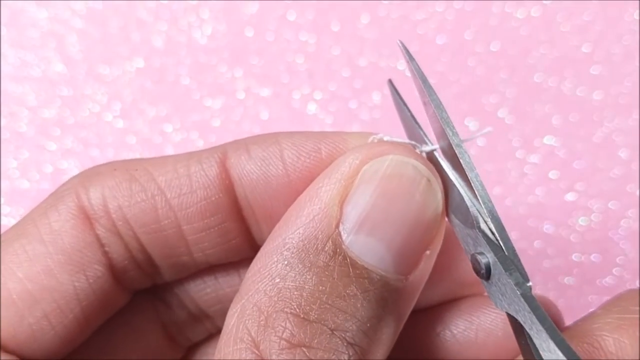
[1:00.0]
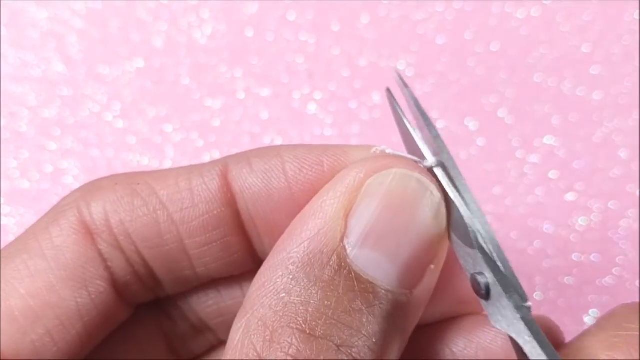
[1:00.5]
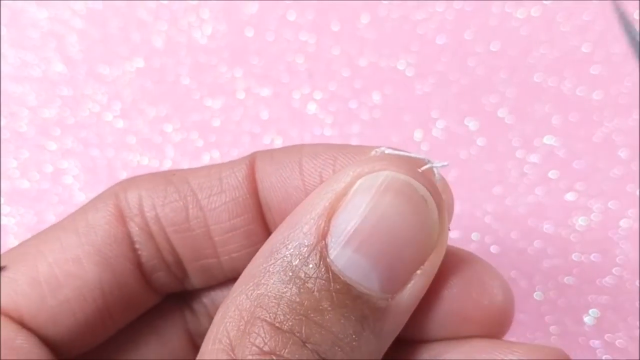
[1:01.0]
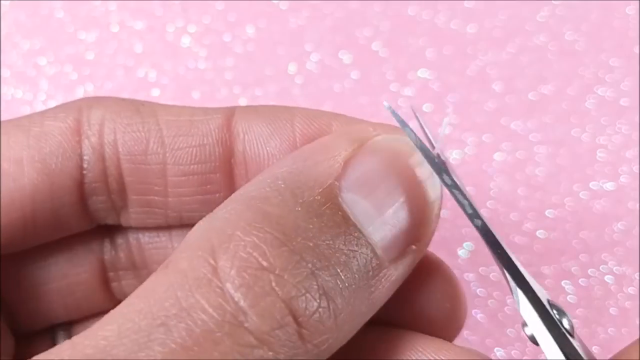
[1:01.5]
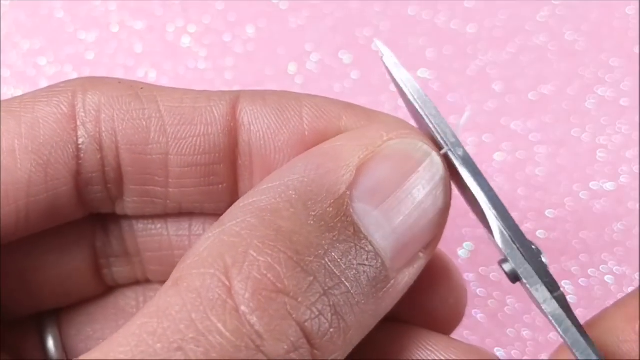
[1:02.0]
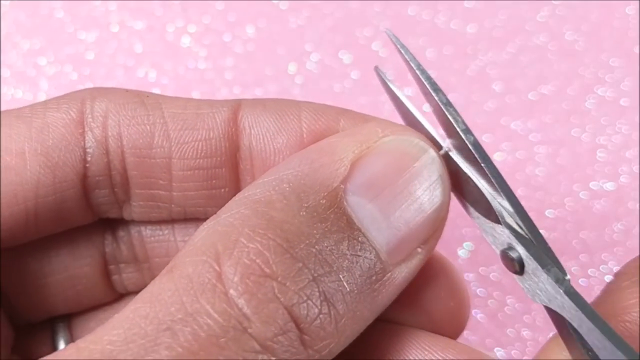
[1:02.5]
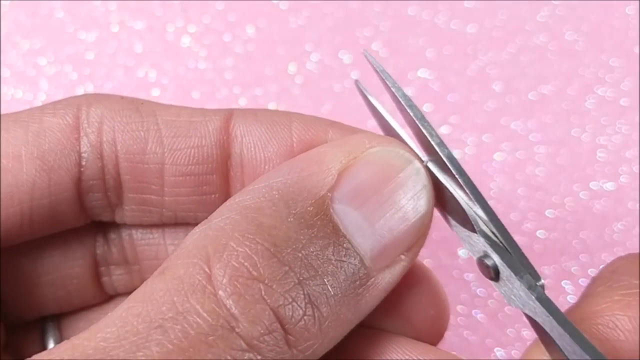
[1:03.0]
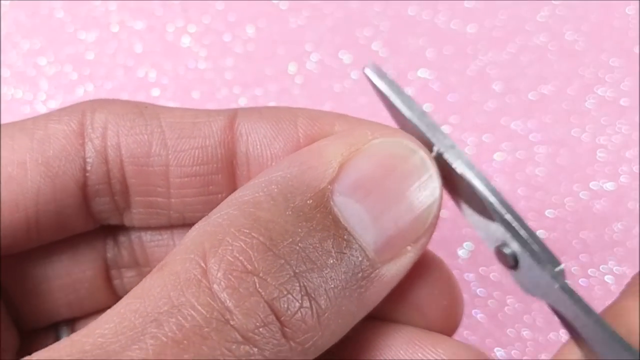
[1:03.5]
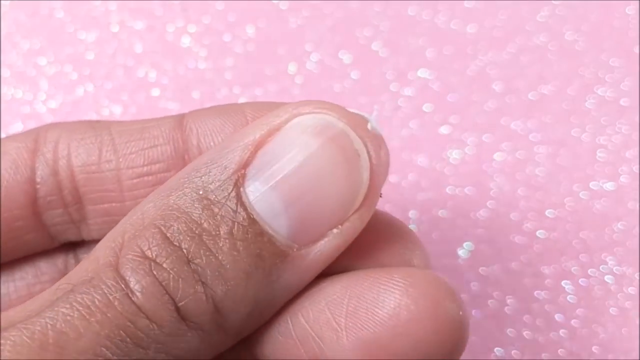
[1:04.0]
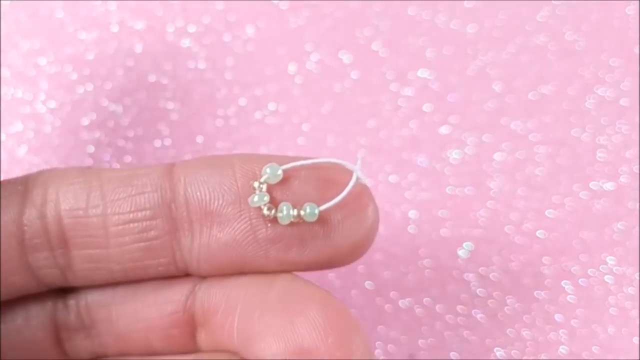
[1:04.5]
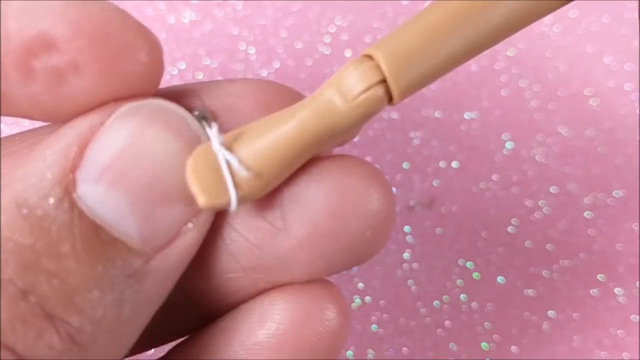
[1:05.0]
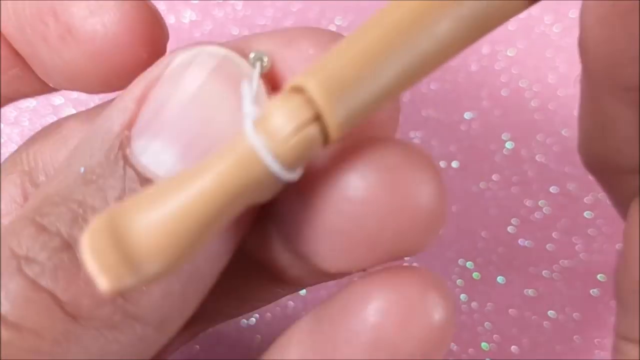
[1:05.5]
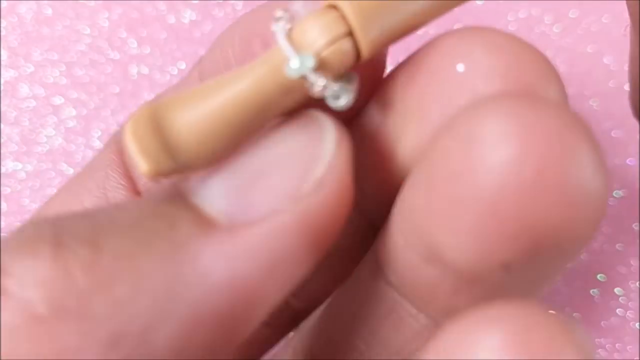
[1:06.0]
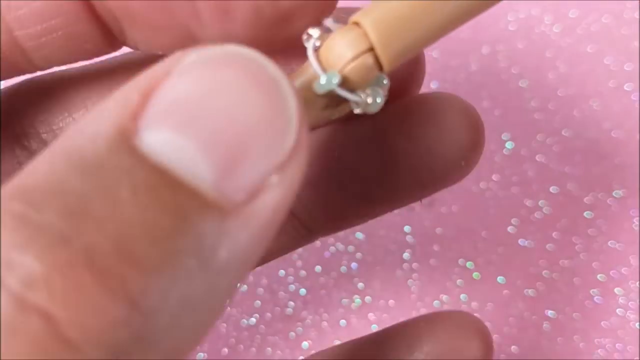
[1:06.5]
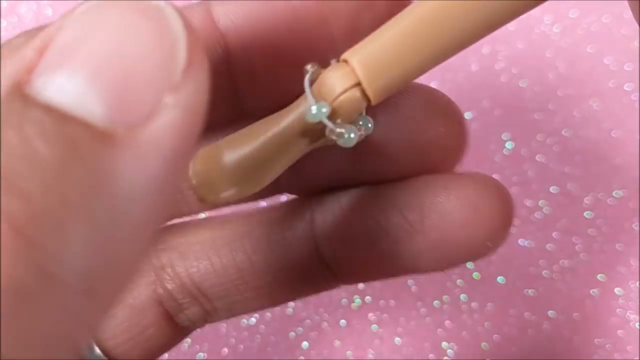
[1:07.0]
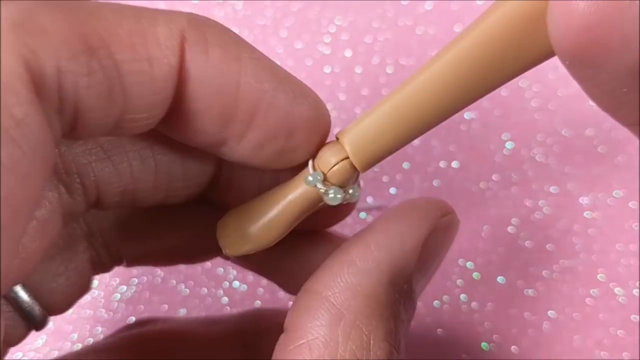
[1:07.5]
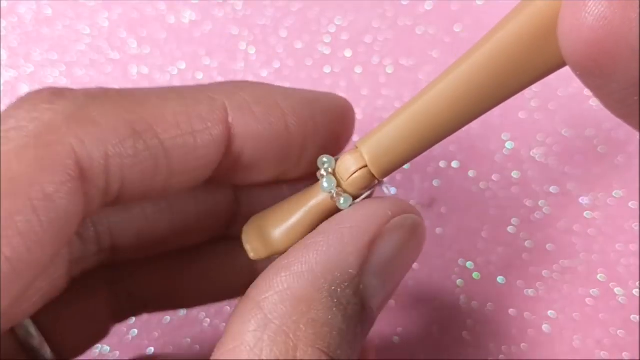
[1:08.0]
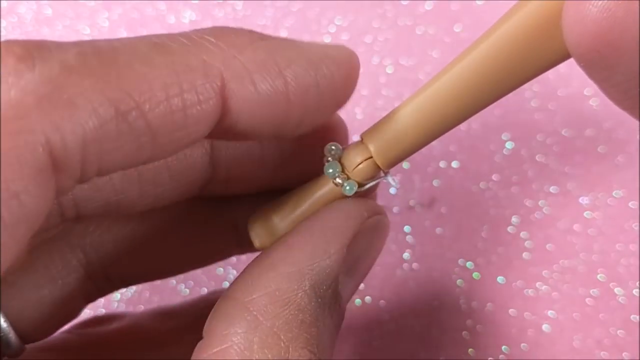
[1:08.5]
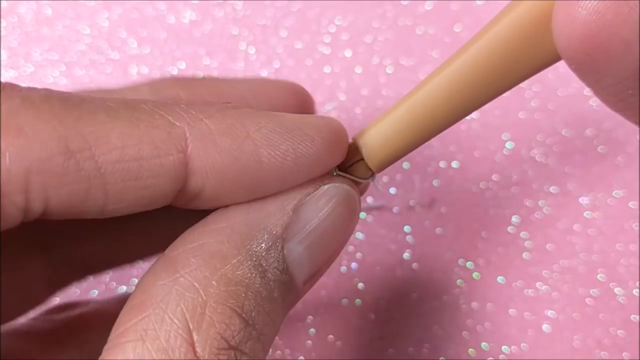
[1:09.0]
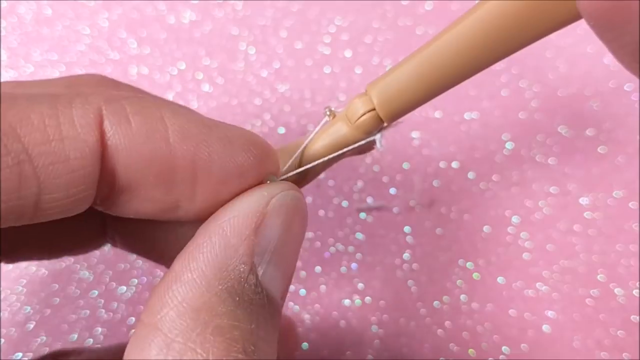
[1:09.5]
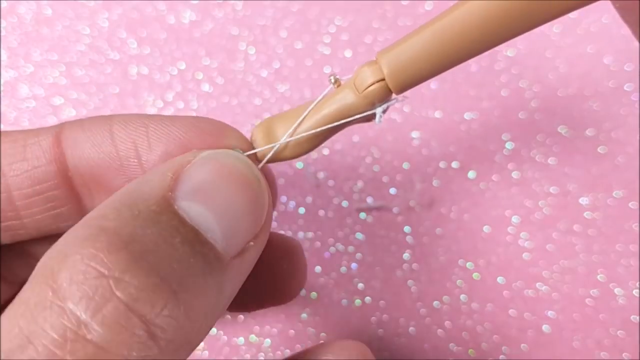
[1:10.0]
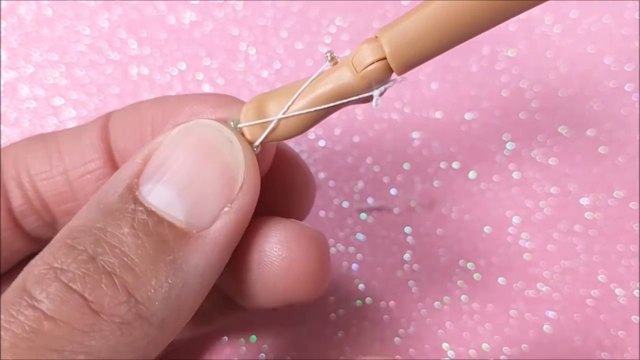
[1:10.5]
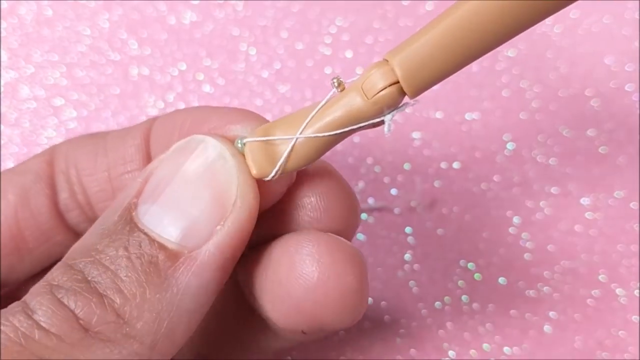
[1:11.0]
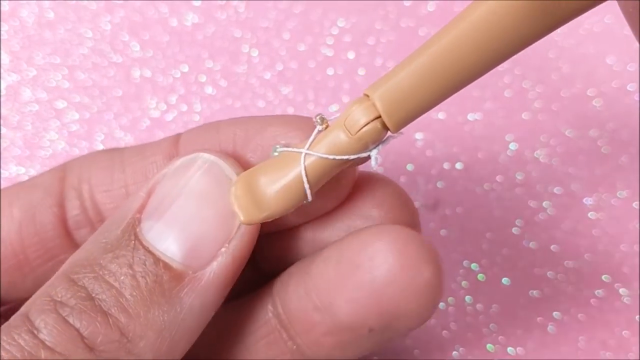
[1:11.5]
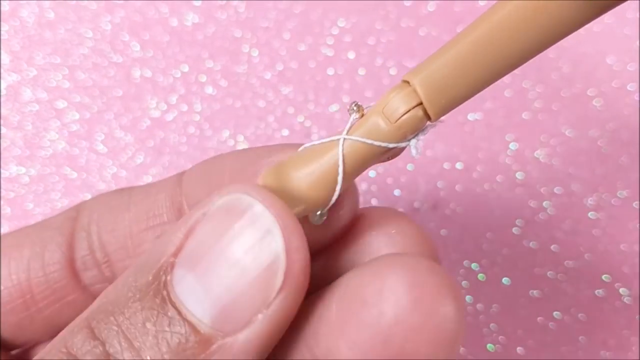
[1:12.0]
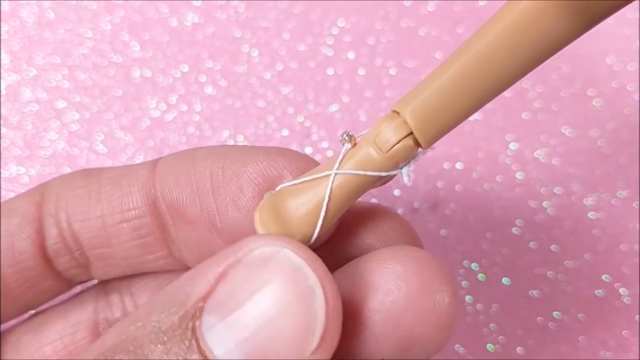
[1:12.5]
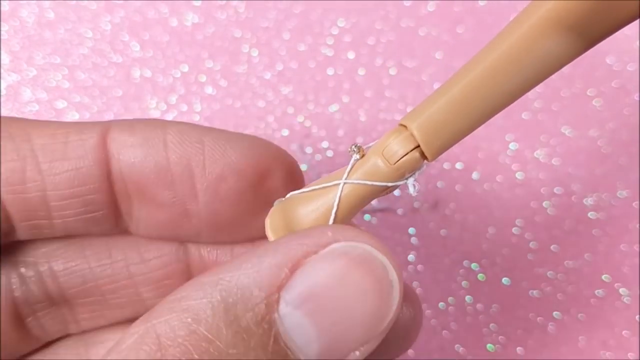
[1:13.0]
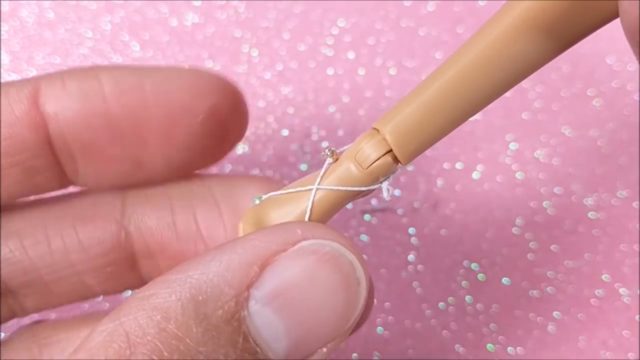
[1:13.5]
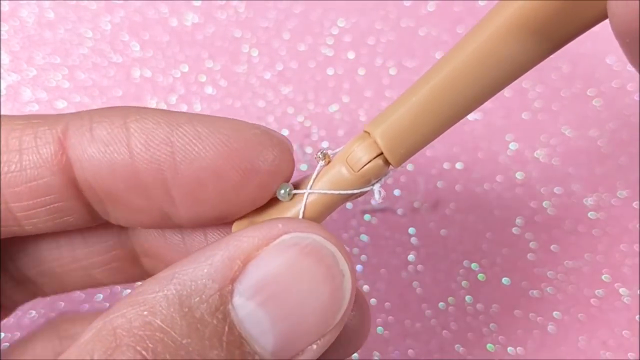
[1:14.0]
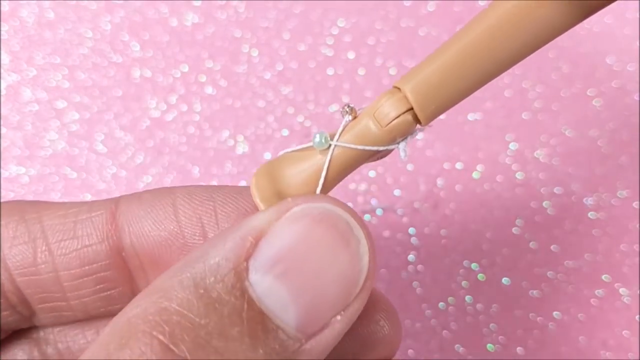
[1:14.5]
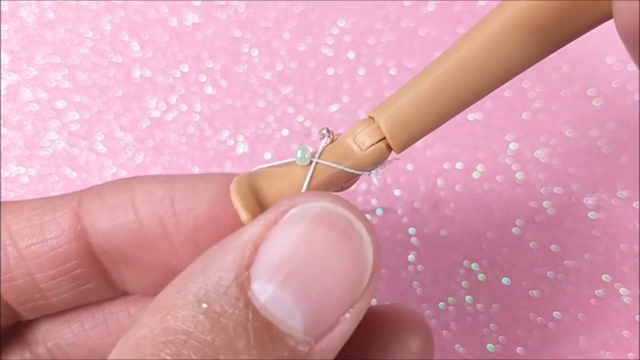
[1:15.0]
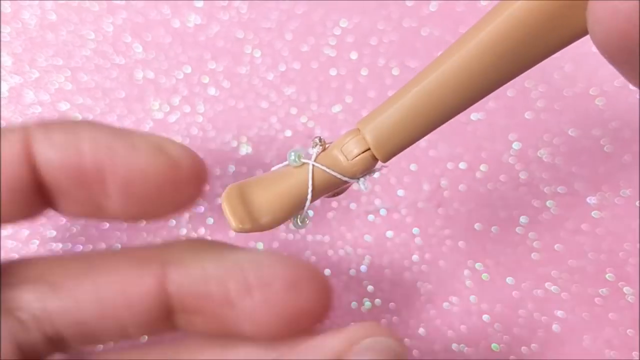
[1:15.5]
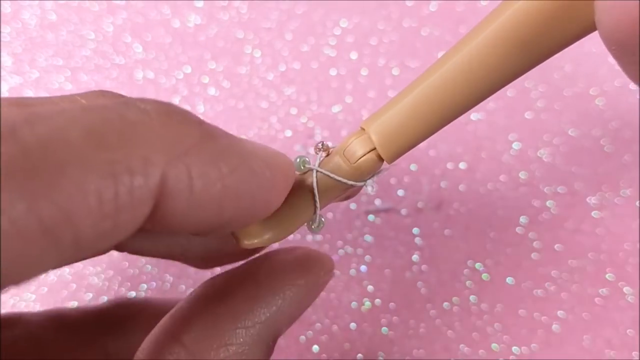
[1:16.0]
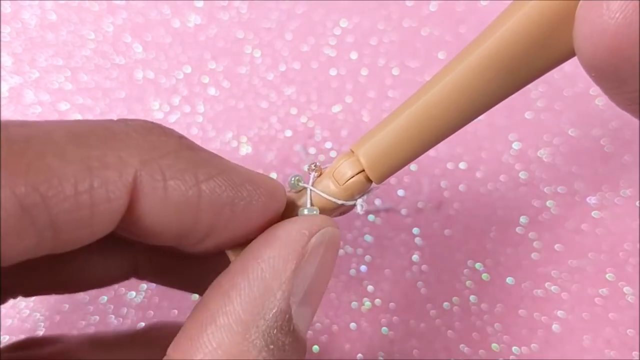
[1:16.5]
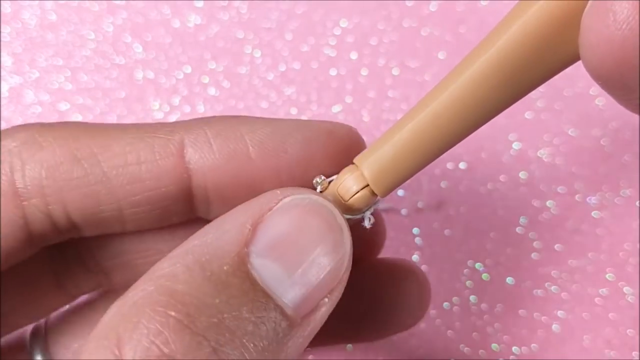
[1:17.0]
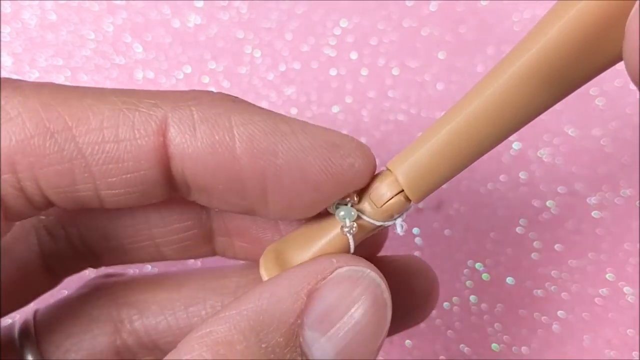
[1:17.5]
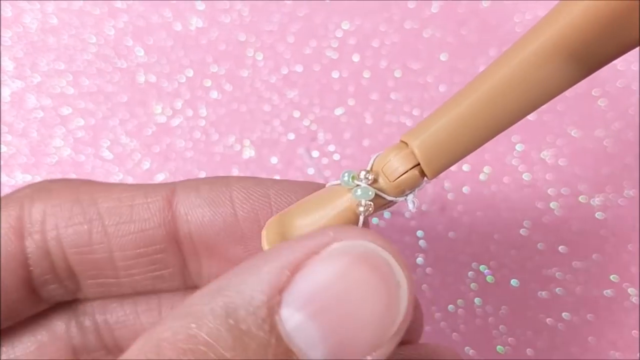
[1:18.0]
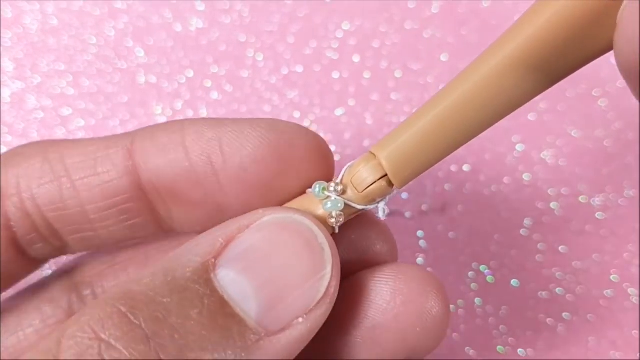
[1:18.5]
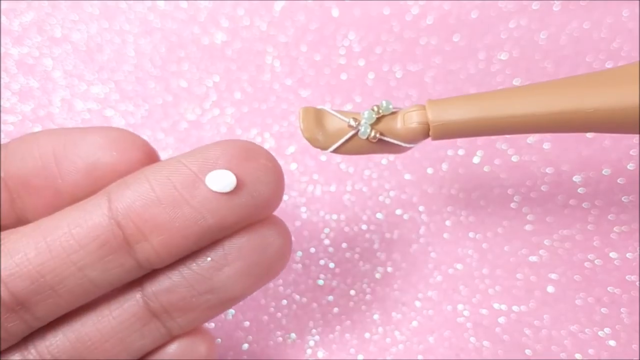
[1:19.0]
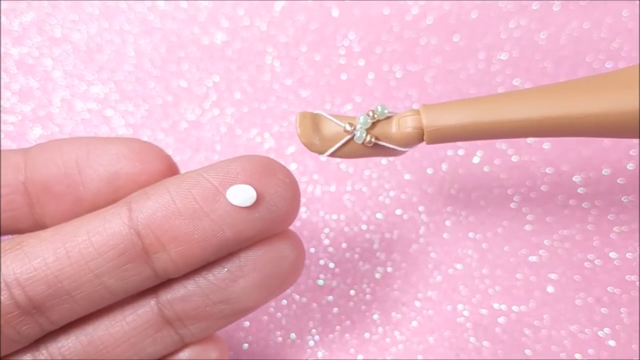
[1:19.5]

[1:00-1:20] The video shows how the string-and-bead sandal is put on. She cuts the loose ends and puts the sandal on the Barbie's foot, then makes an X, like a figure eight, and puts that on the foot. The beads are moved so they sit toward the front, and the string stretches over the foot, making it look like a realistic woman's sandal. Toward the end, one more accessory is shown to the camera, though it is not clearly visible.